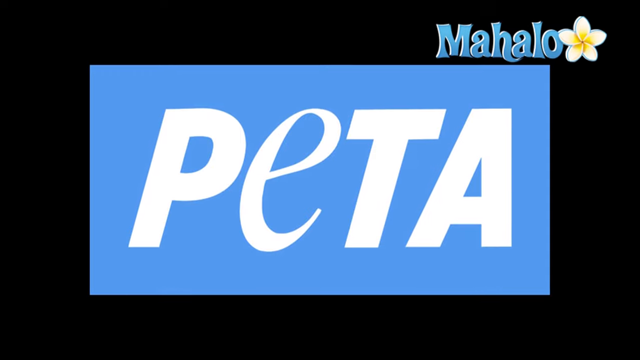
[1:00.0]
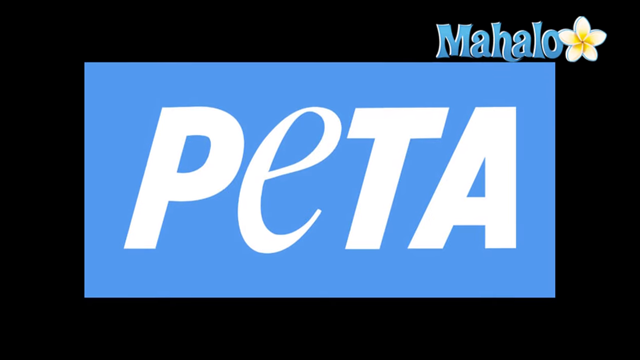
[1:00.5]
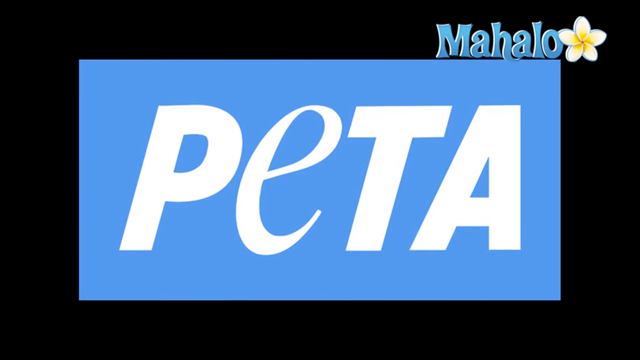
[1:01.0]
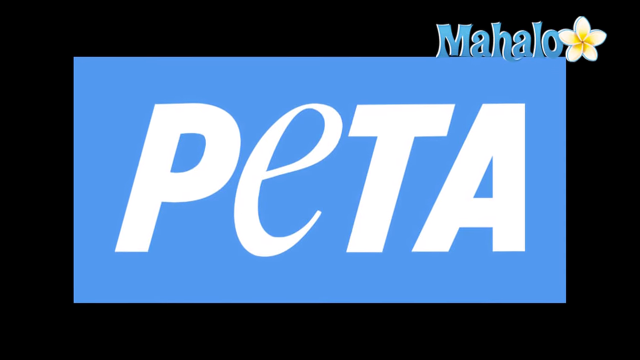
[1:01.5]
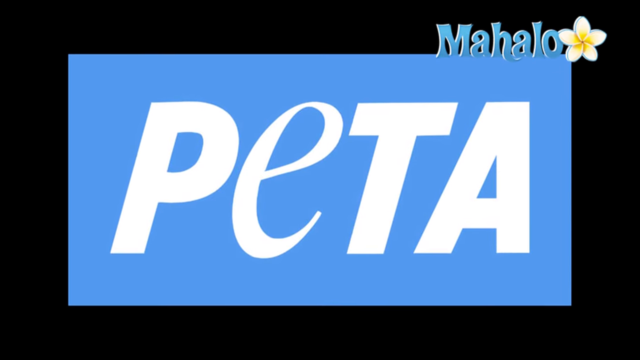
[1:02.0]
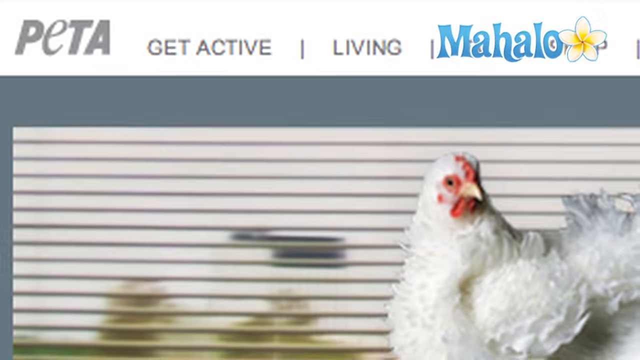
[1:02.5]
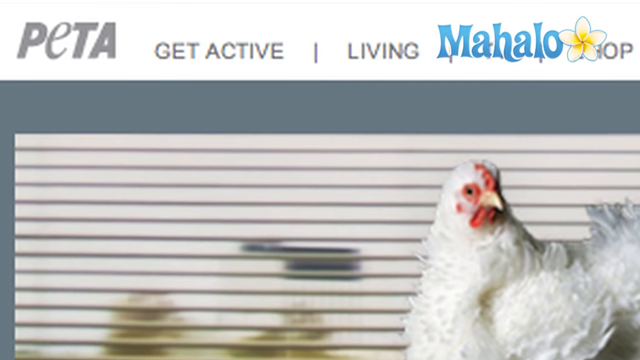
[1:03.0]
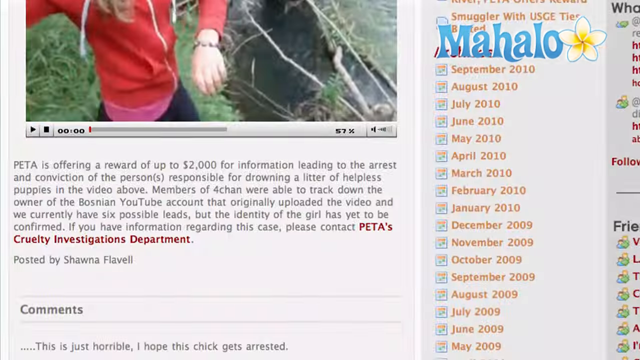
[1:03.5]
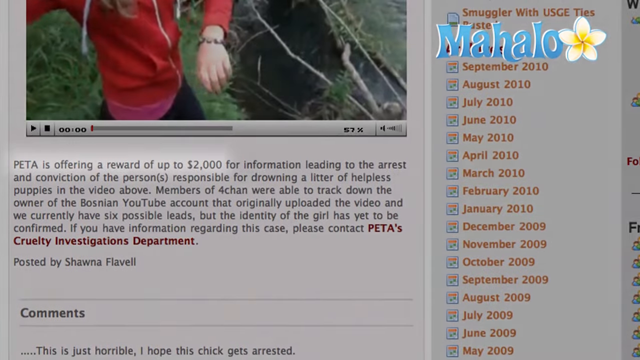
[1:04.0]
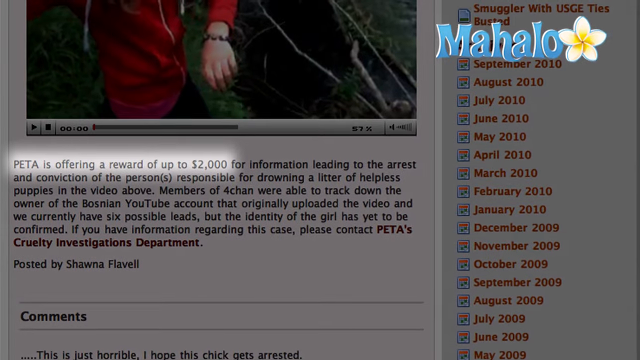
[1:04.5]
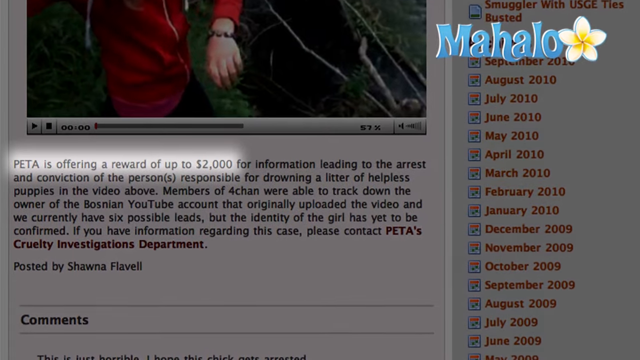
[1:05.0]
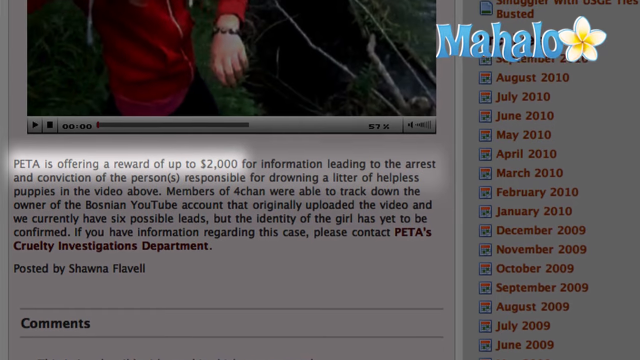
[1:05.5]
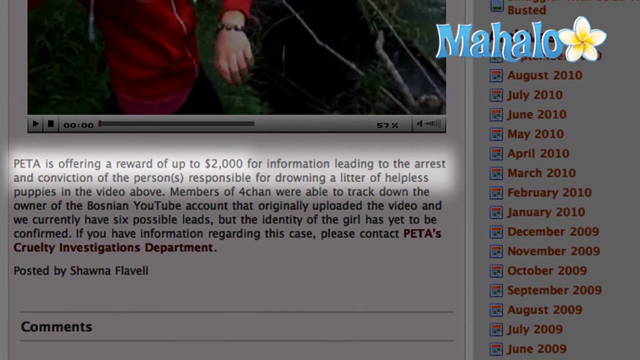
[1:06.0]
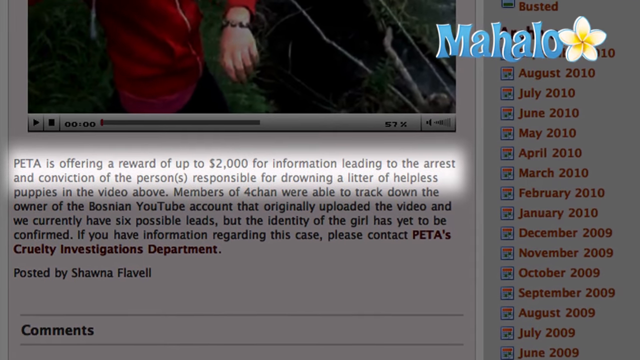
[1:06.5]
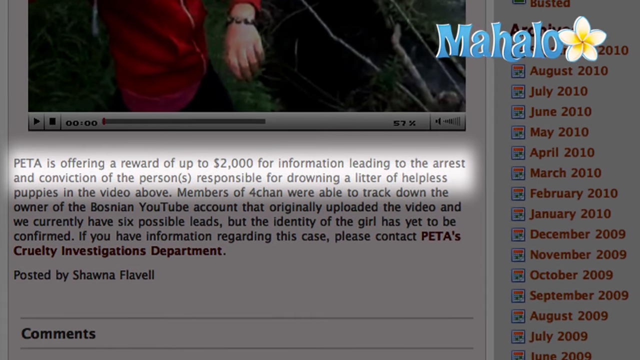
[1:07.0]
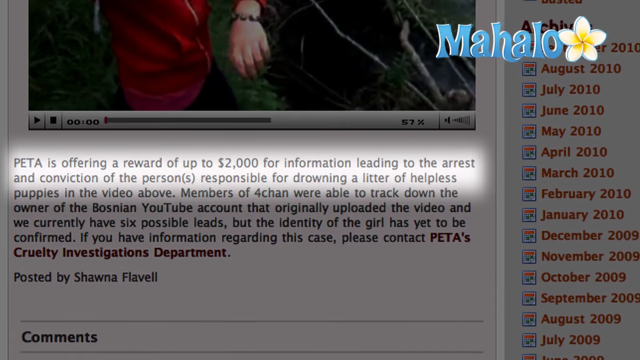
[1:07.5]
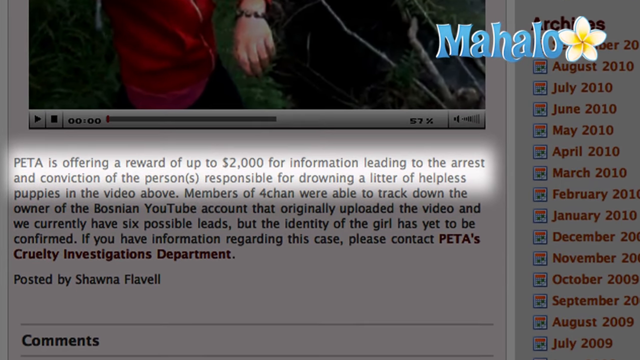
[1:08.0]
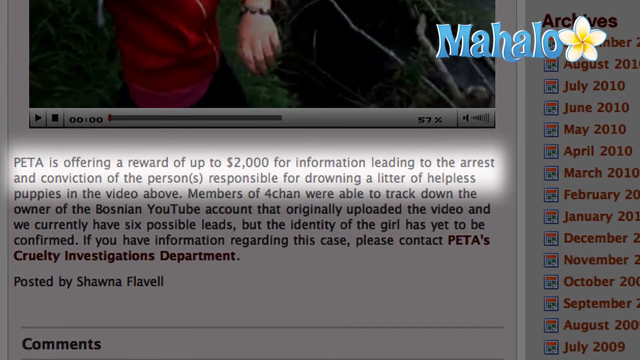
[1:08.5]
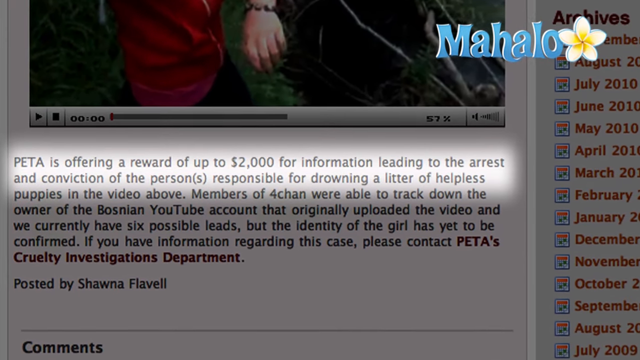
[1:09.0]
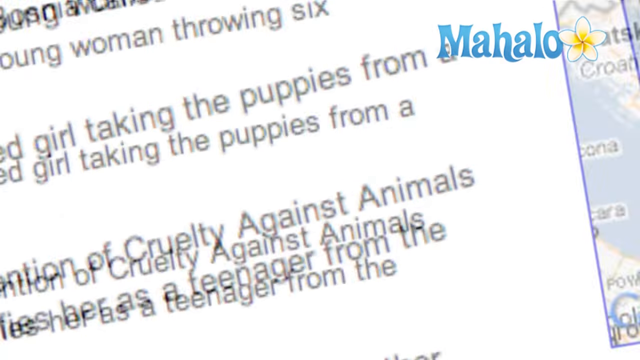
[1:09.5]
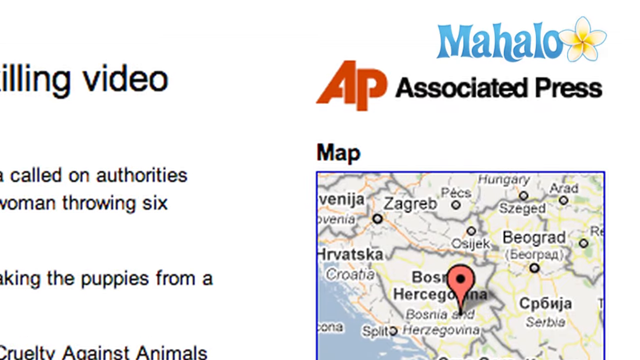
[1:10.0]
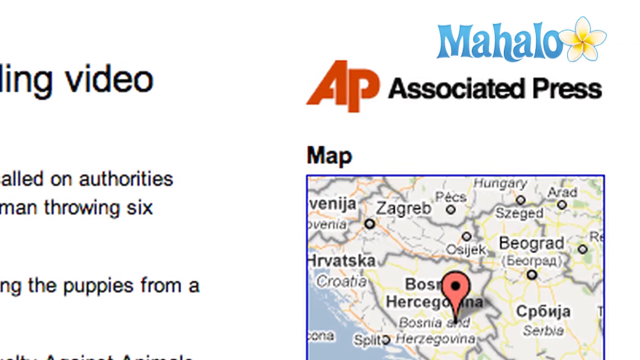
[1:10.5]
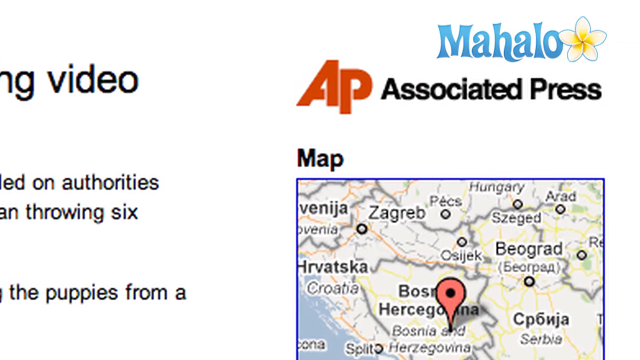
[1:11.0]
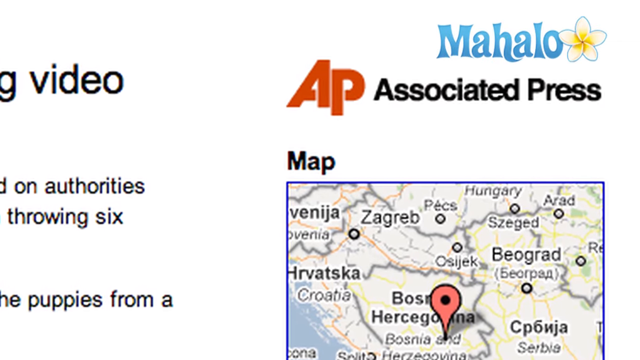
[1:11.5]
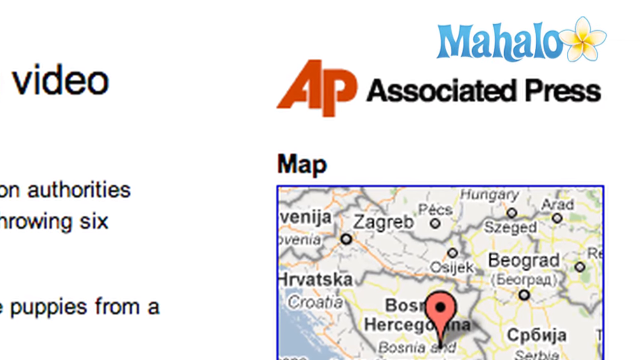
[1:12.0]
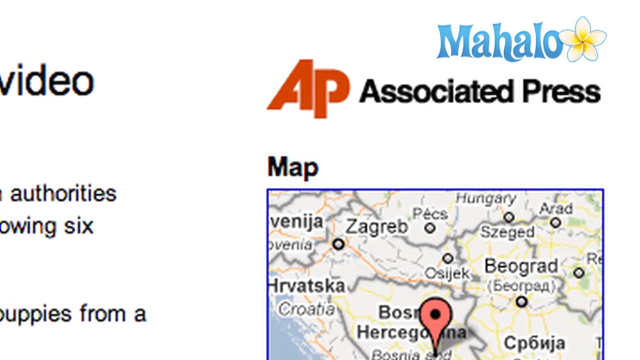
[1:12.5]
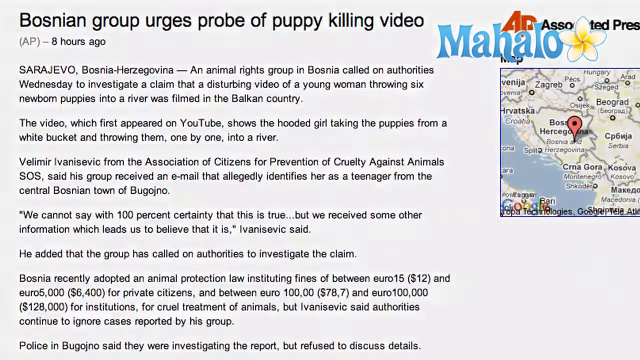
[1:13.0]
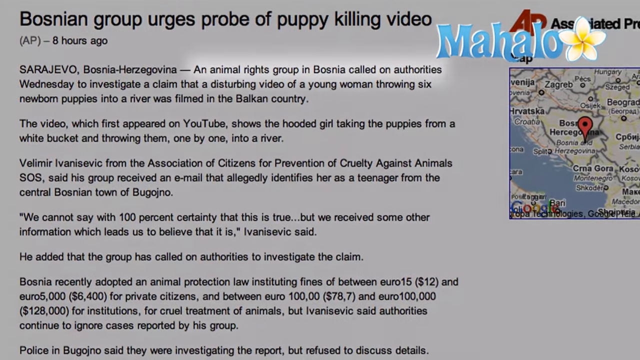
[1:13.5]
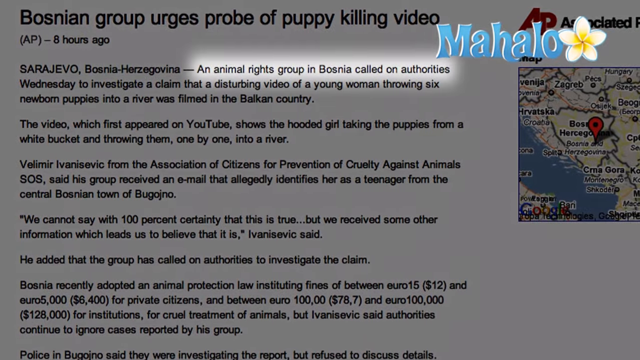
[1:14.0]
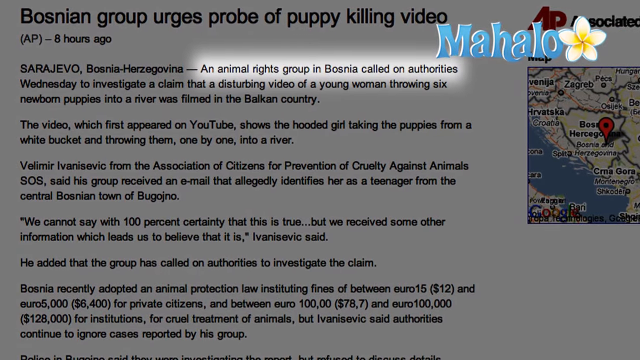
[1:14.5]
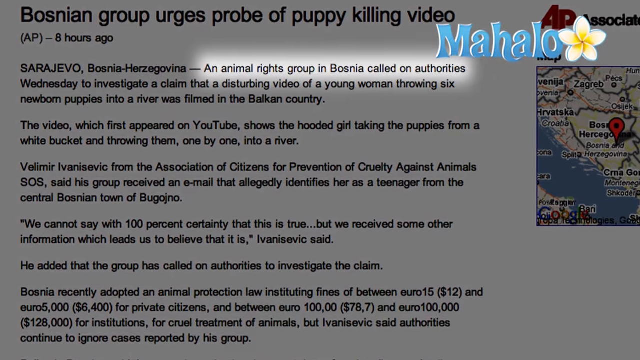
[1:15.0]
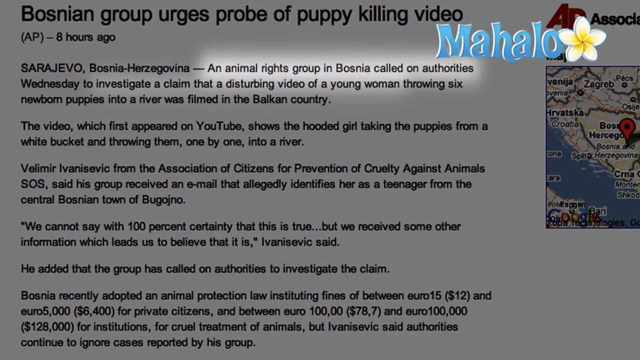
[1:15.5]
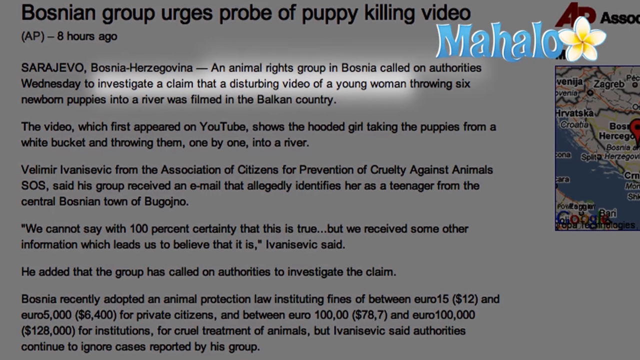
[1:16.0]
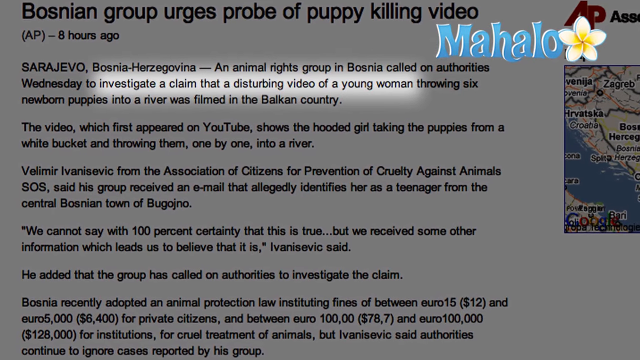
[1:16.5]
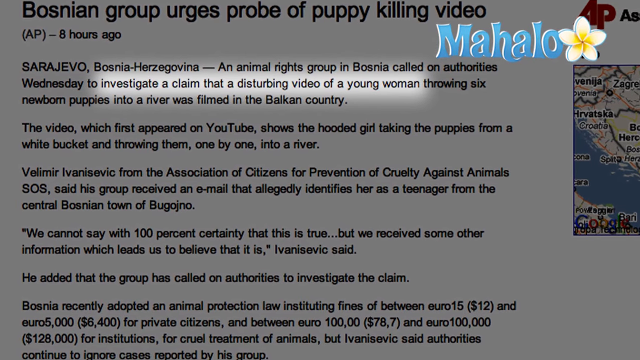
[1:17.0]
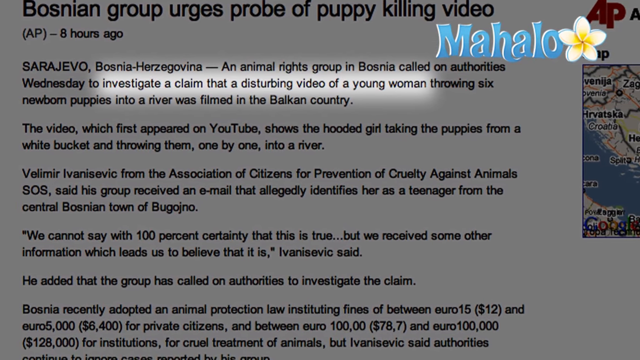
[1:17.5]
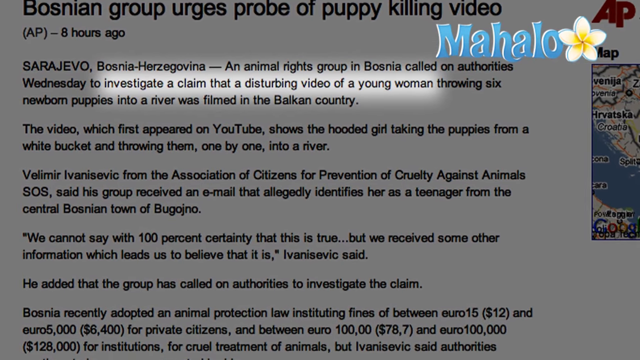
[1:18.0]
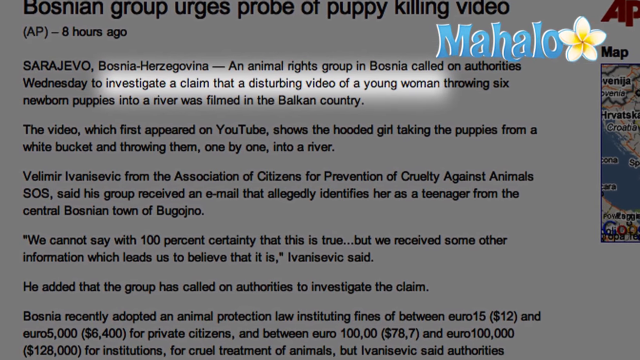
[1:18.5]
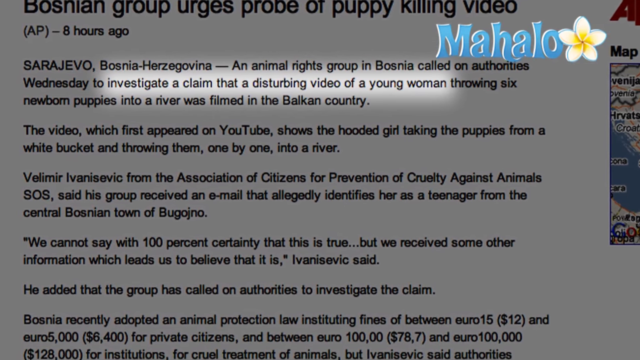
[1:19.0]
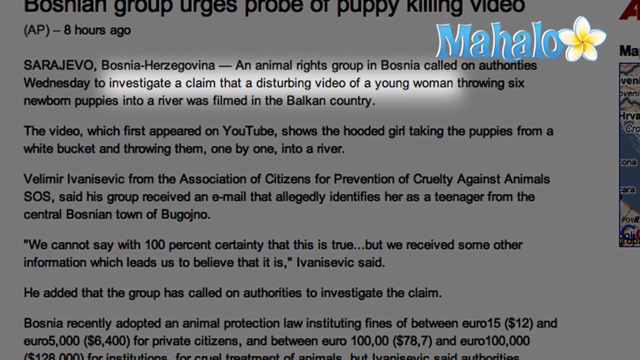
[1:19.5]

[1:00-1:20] The word "PETA" appears on the screen in white. A white chicken is in the right corner of the news headlines. The picture of the girl appears again. Text says "PETA is offering a reward of up to $2,000" for any information leading to the arrest and conviction of those responsible for drowning the puppies. It also reads "an animal rights group in Bosnia called on authorities on Wednesday to investigate a claim that a disturbing video of a young woman throwing six newborn puppies into a river was filmed in the Balkan country." A headline reads "Bosnian group edges probe of puppy killing video," posted eight hours ago. There is also something that looks like a map.